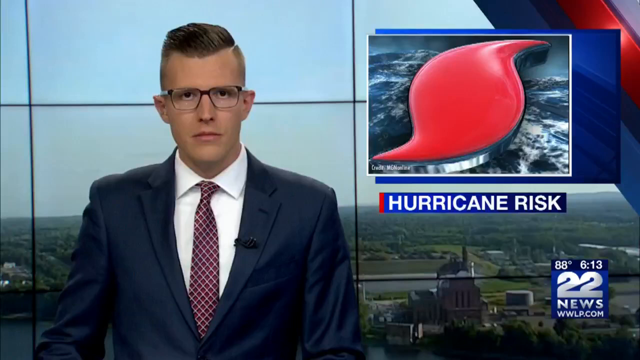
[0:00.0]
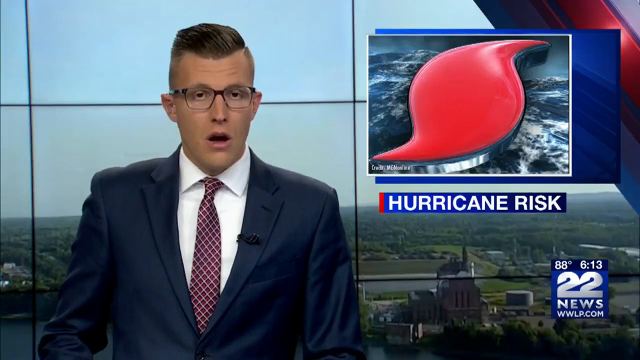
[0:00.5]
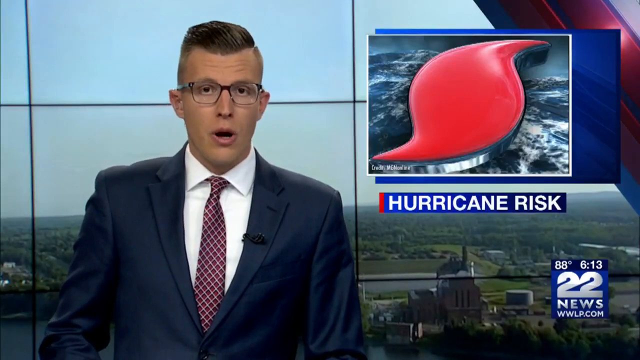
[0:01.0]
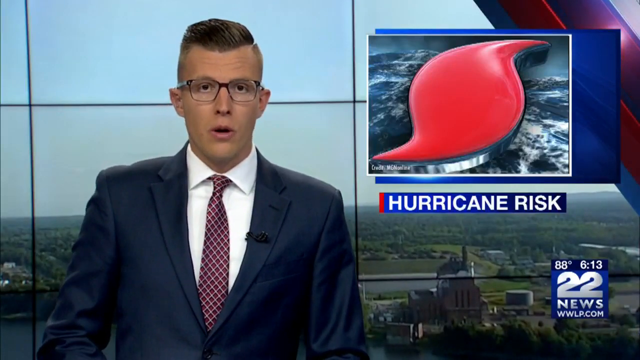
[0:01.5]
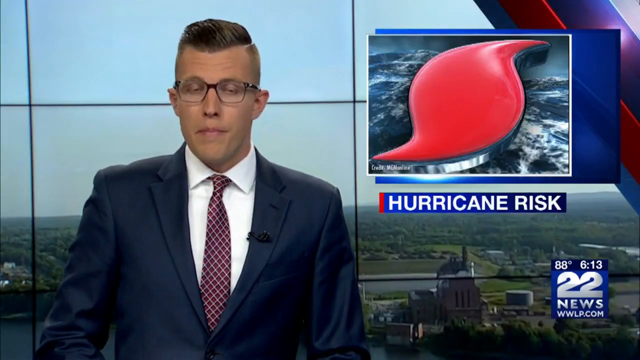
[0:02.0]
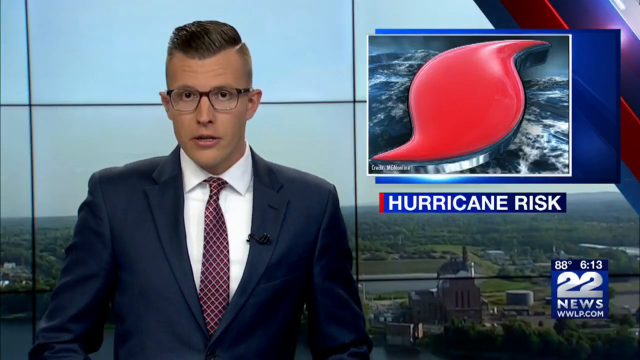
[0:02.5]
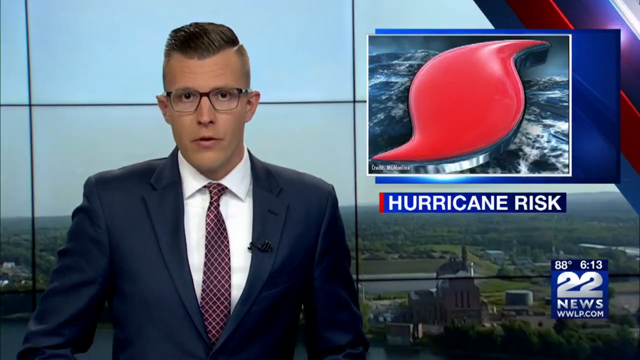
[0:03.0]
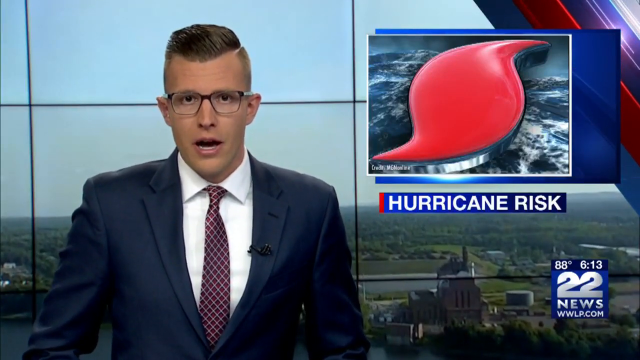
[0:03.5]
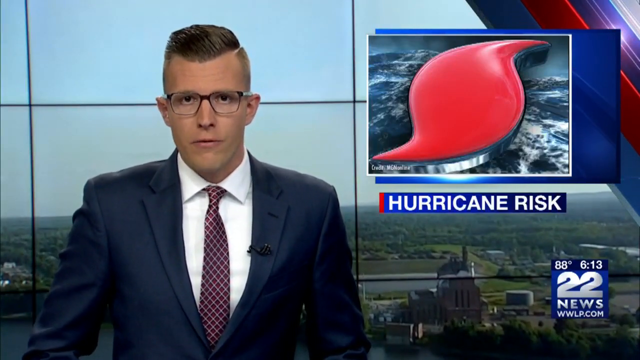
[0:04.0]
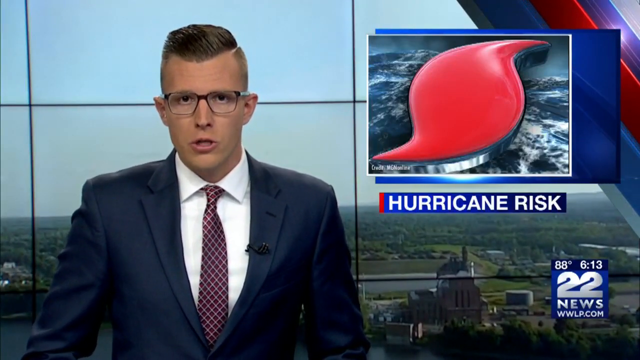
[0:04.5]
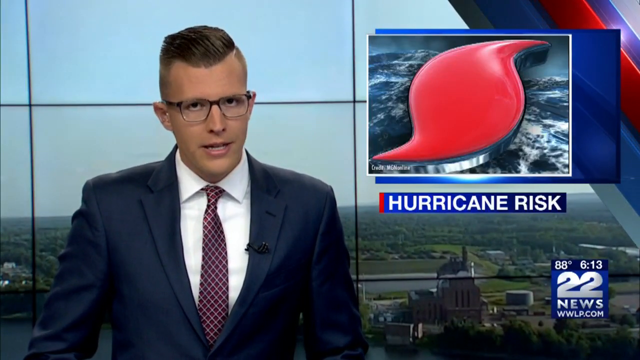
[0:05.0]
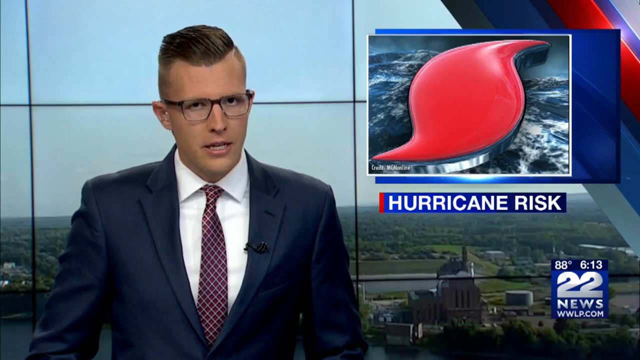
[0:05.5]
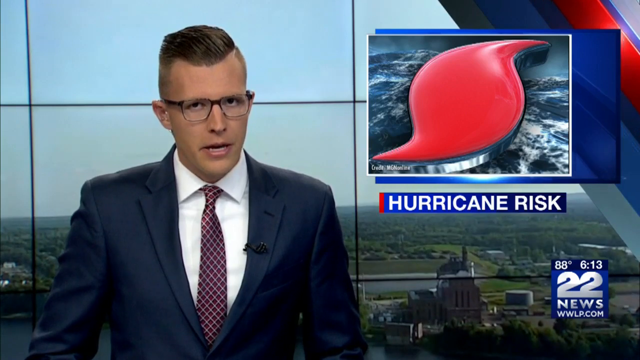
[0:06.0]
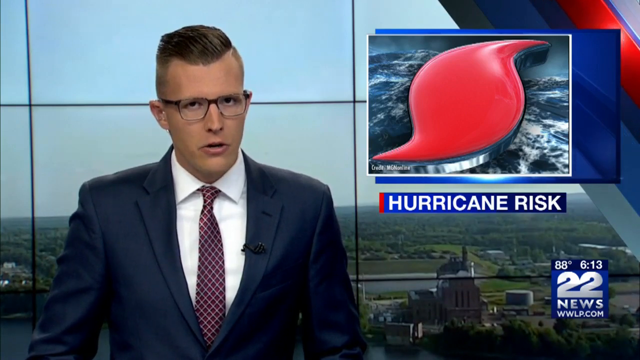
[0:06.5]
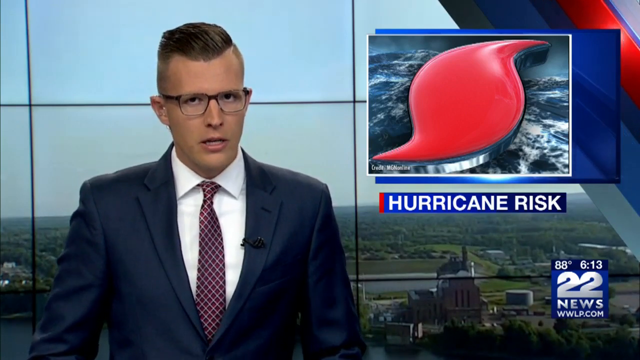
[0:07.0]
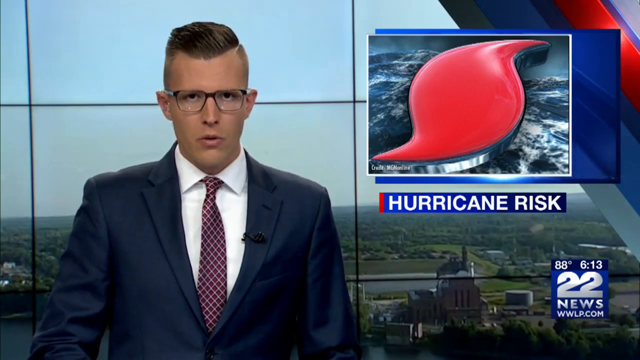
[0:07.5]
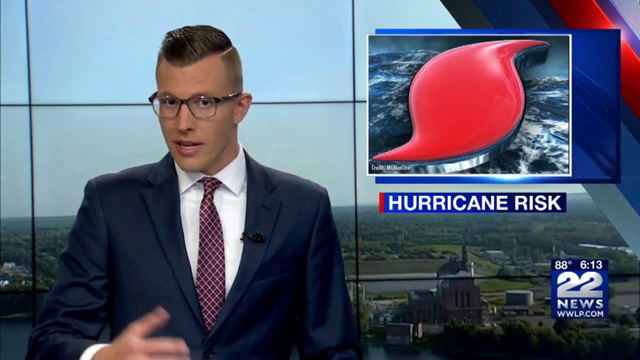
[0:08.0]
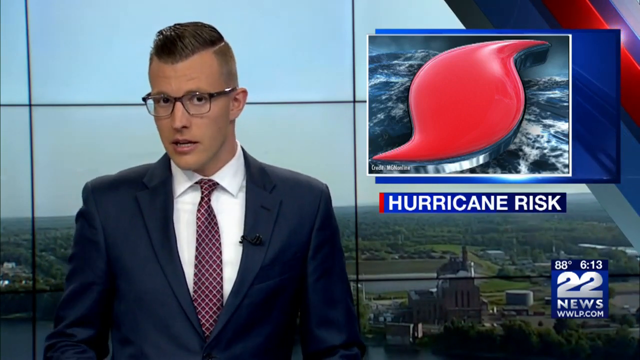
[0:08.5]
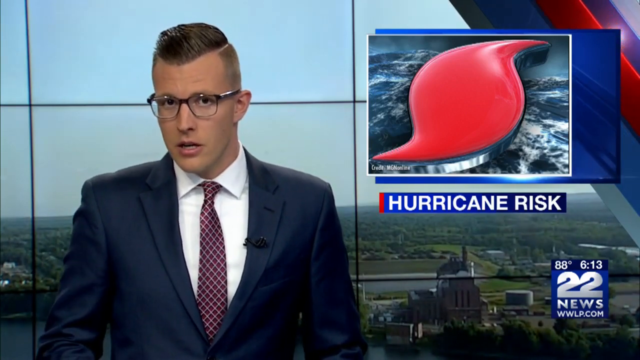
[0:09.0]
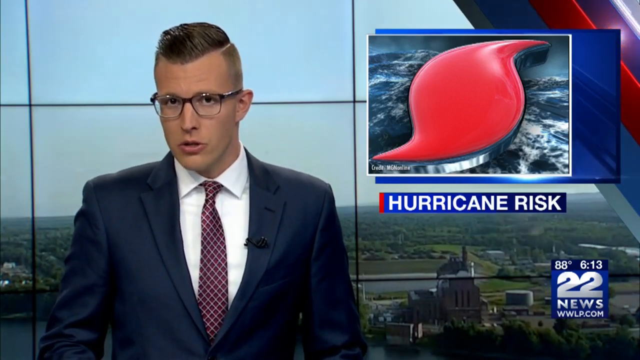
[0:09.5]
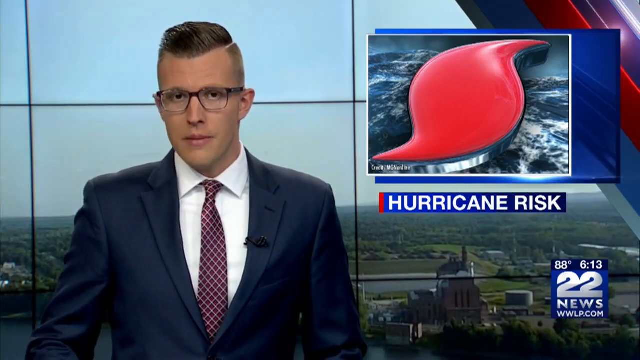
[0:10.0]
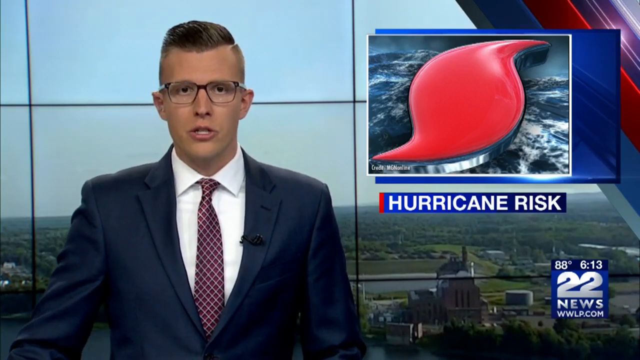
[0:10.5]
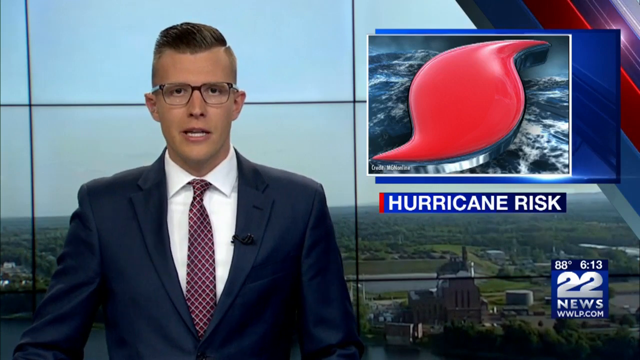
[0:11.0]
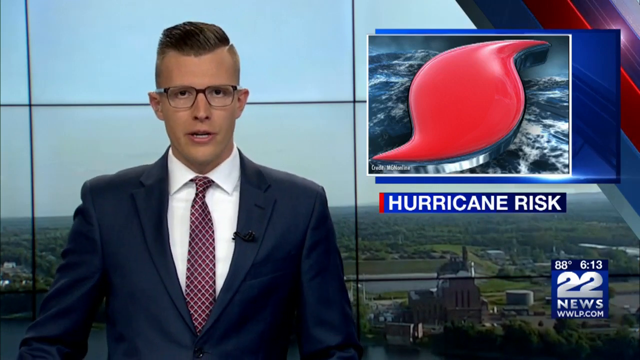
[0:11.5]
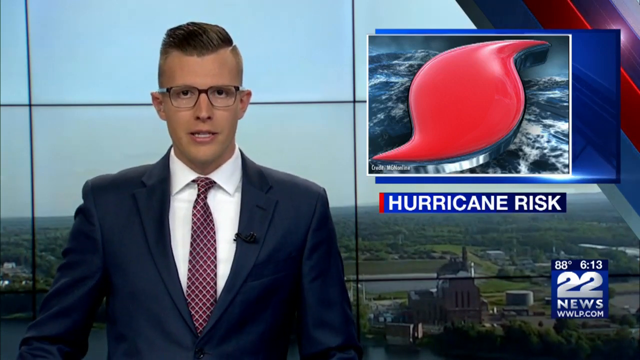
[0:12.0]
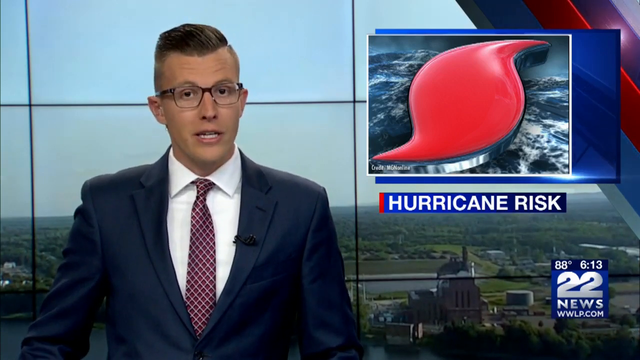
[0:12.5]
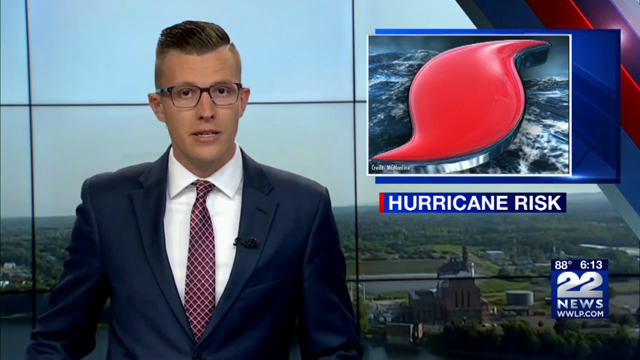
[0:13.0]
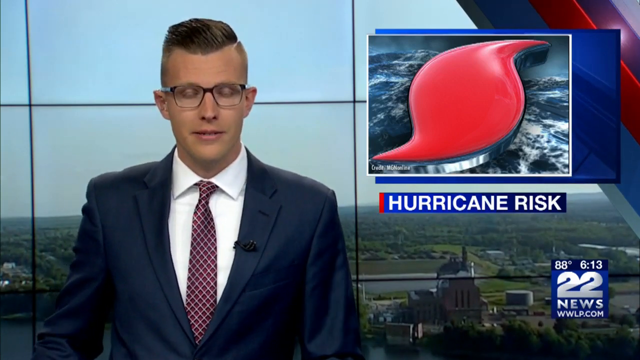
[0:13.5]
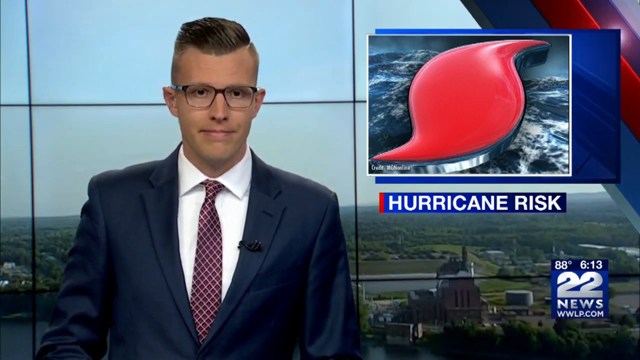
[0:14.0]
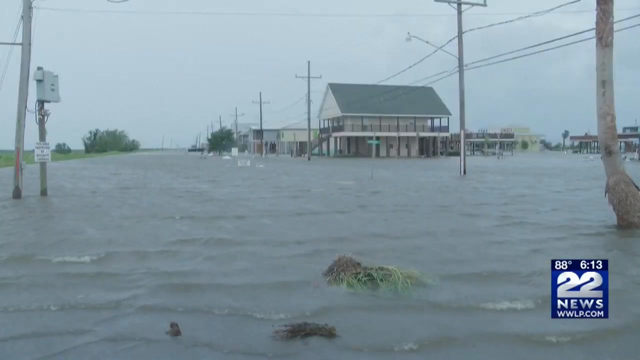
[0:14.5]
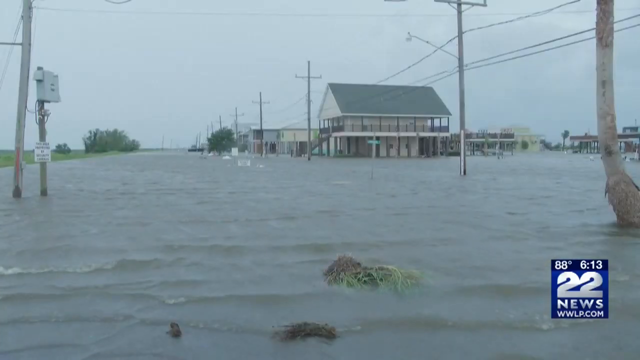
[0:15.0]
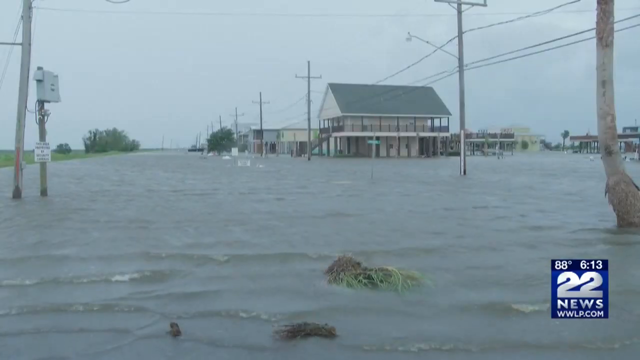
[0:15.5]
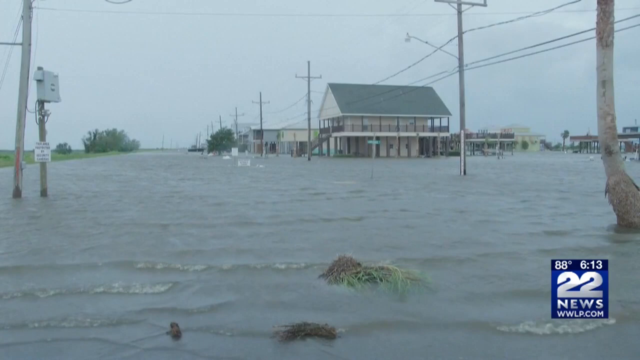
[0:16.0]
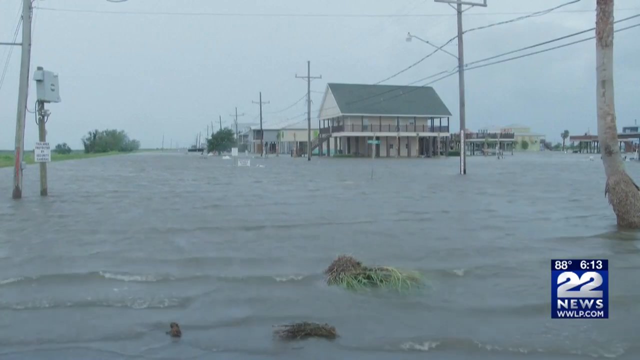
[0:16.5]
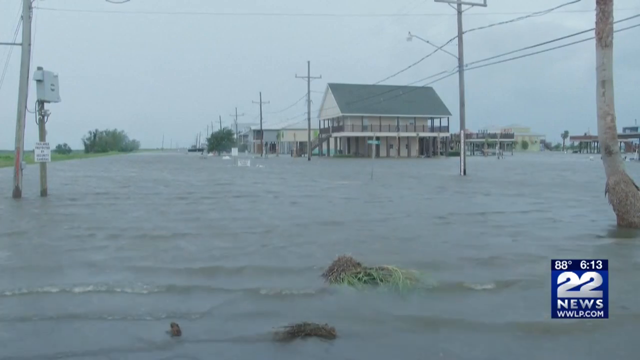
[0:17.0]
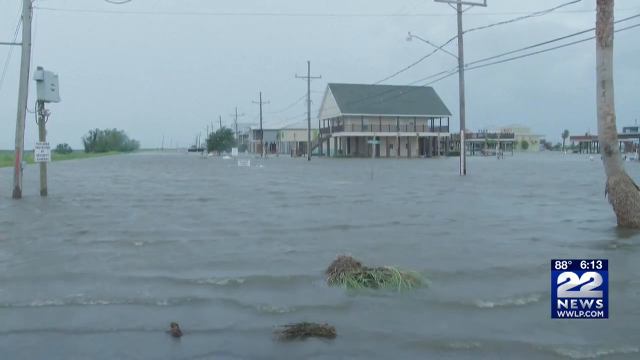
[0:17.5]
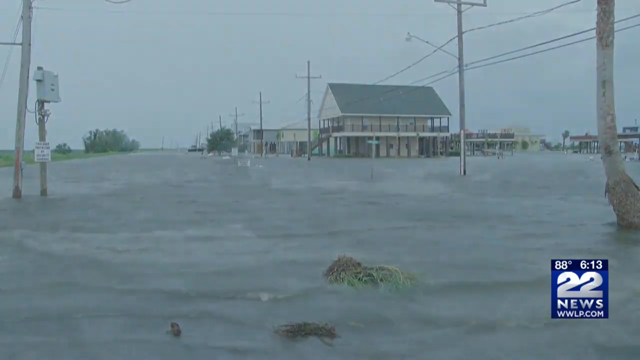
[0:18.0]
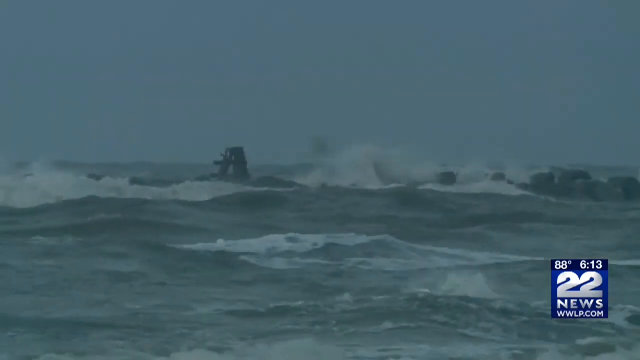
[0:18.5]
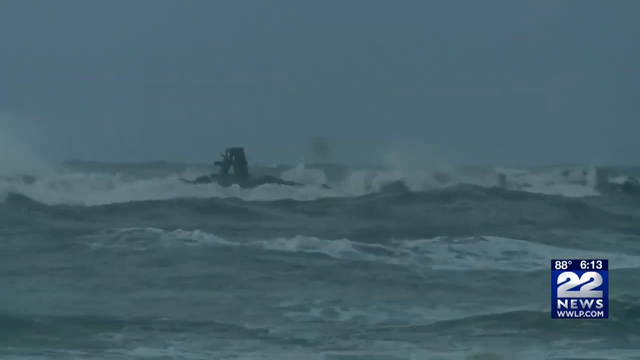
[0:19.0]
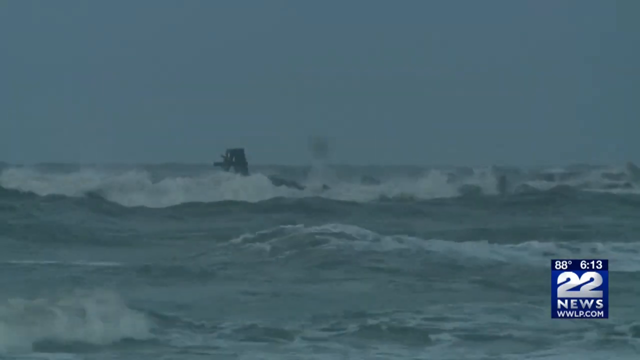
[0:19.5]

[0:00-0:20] A male correspondent wears a black suit, a white t-shirt, a tie and black glasses. Behind him is a glass showing areas. On screen are "22 news", 80 degrees, and the current time. The video shows a house flooded with water and fast-flowing currents of water, with houses everywhere submerged.